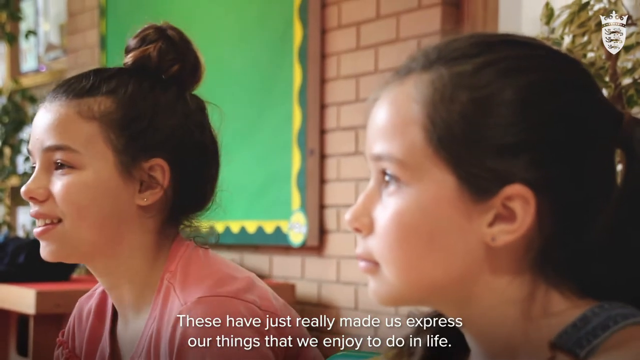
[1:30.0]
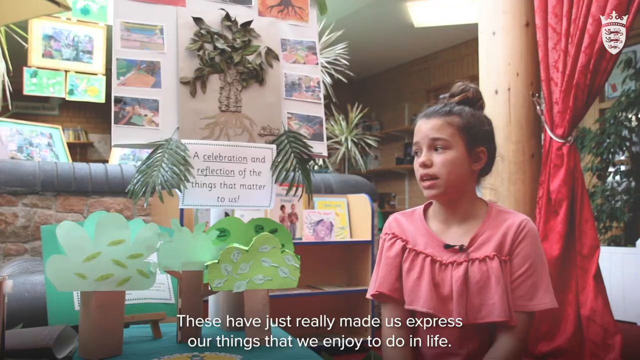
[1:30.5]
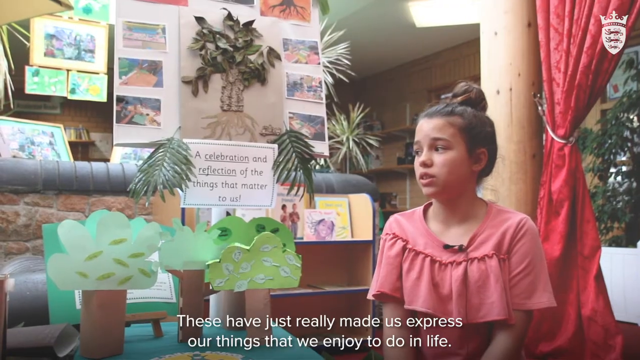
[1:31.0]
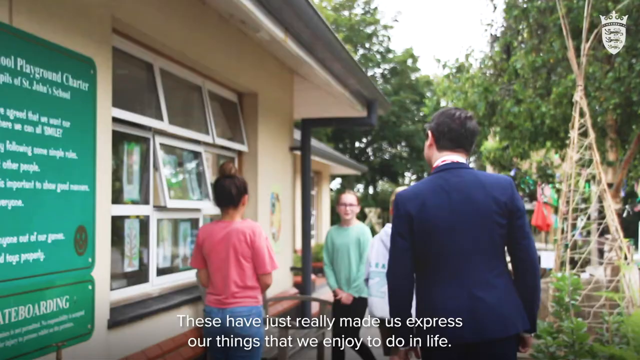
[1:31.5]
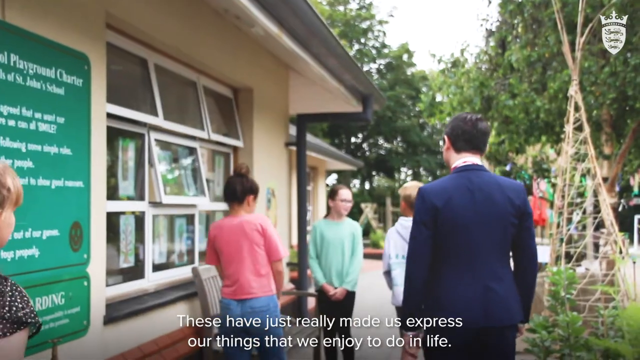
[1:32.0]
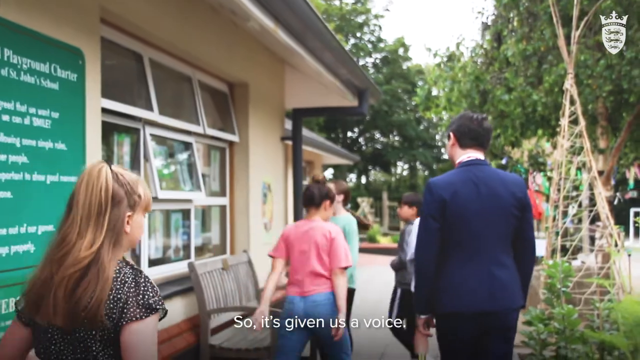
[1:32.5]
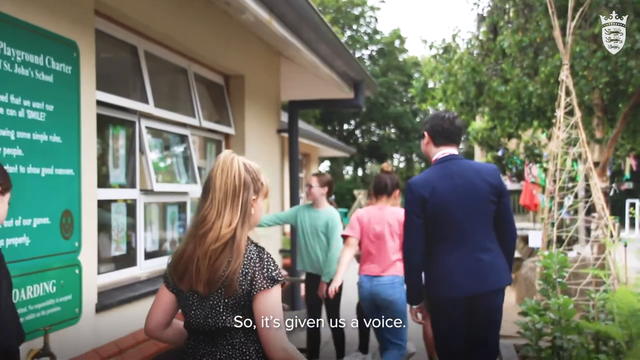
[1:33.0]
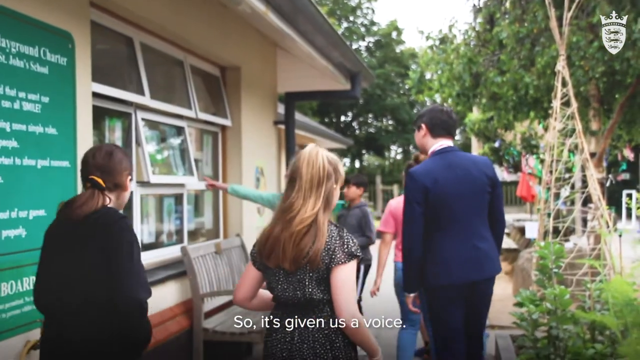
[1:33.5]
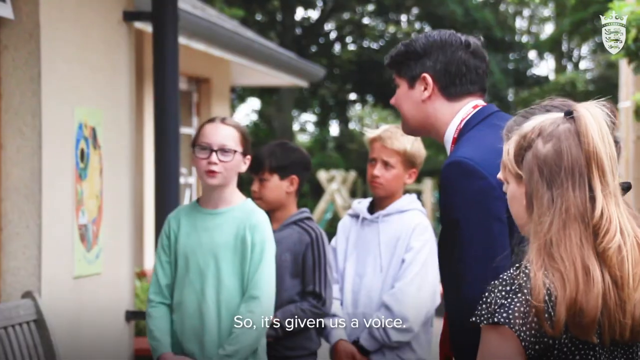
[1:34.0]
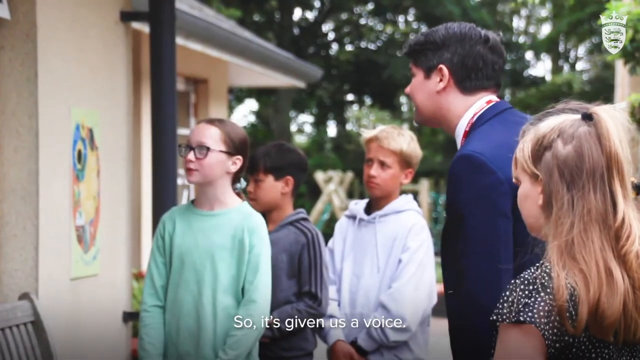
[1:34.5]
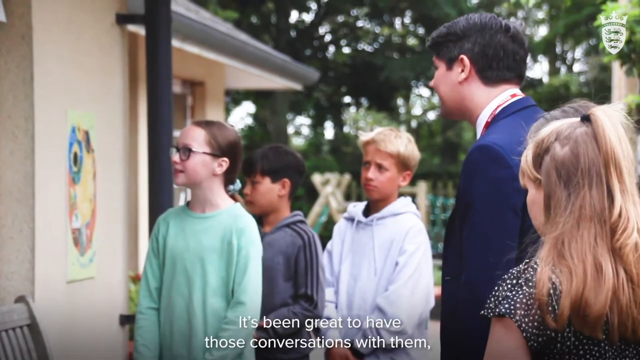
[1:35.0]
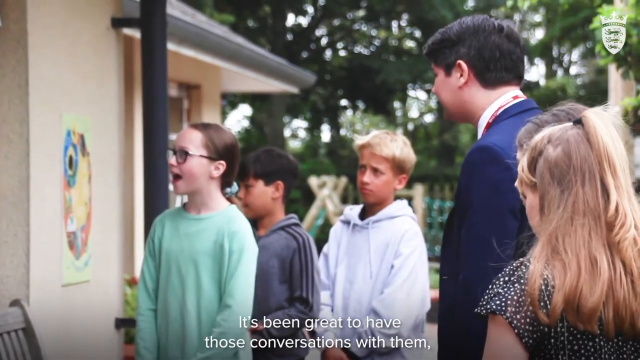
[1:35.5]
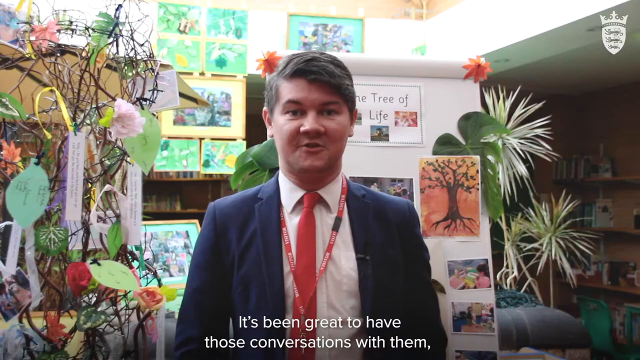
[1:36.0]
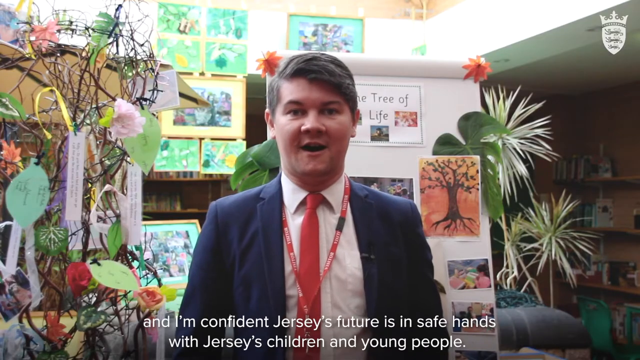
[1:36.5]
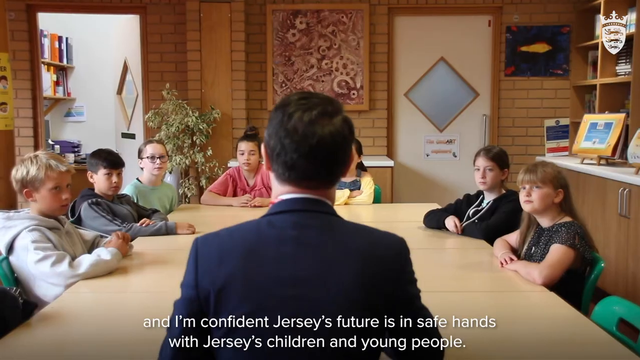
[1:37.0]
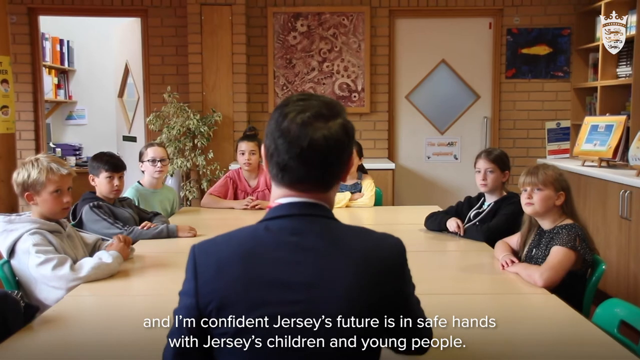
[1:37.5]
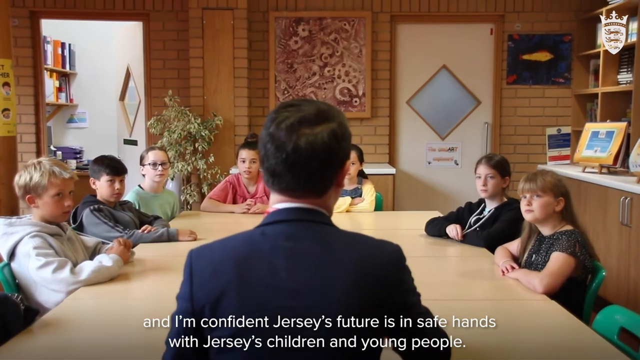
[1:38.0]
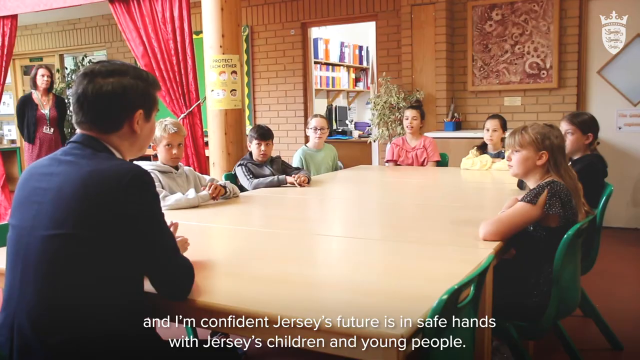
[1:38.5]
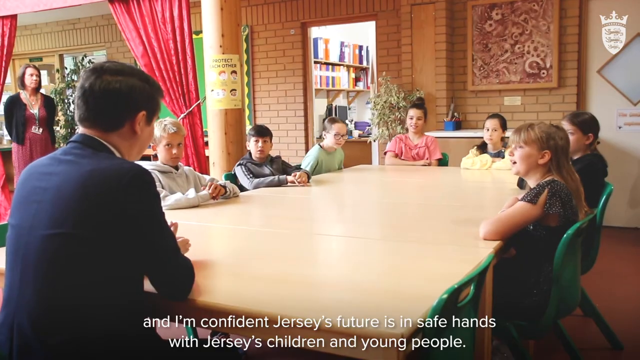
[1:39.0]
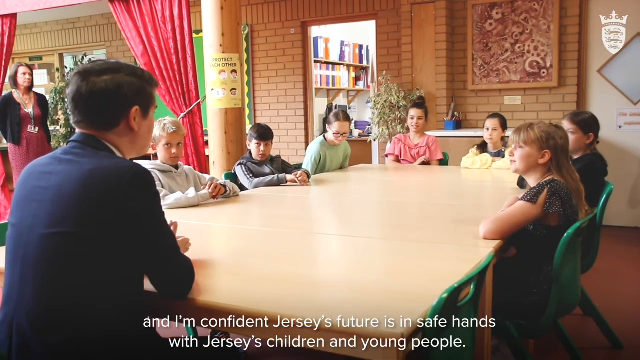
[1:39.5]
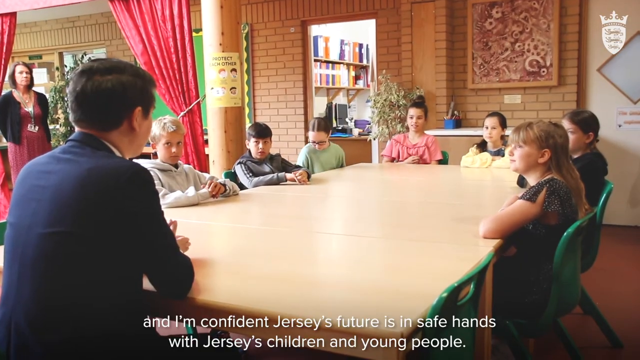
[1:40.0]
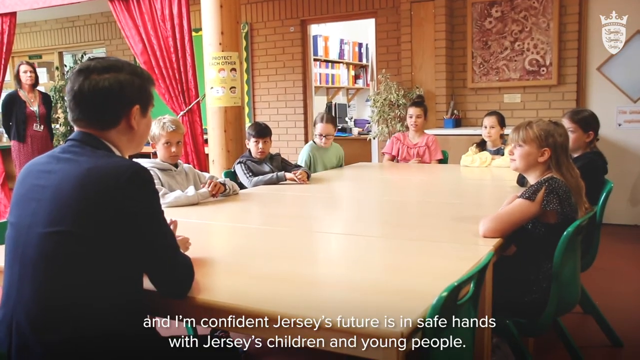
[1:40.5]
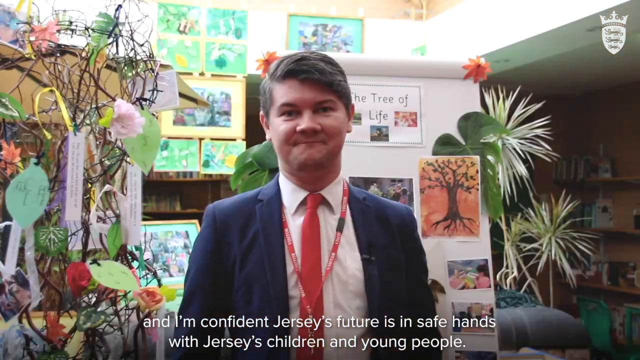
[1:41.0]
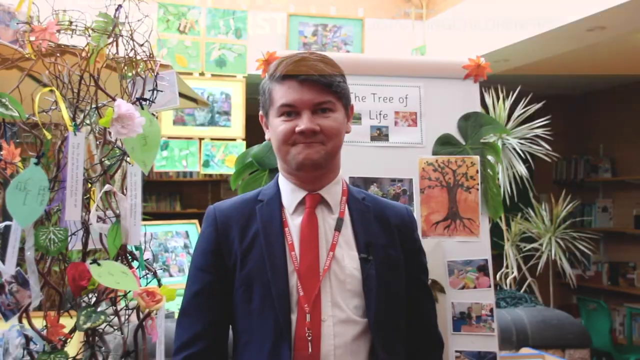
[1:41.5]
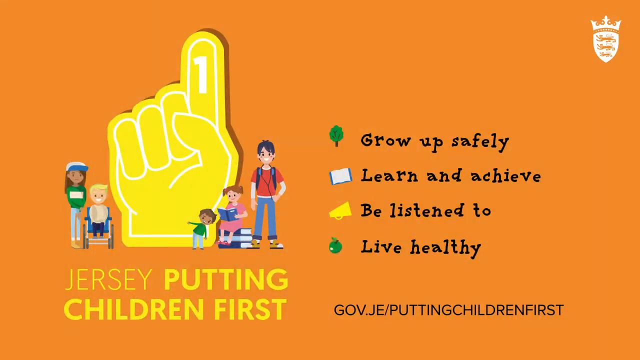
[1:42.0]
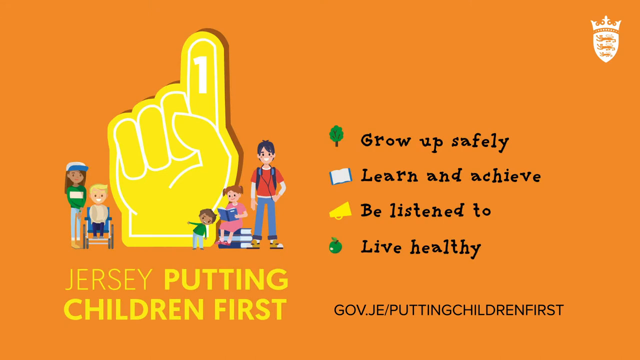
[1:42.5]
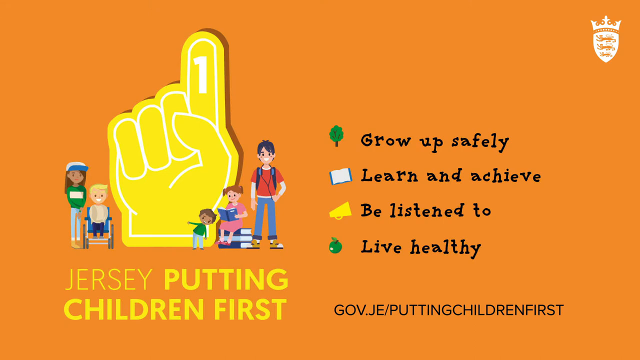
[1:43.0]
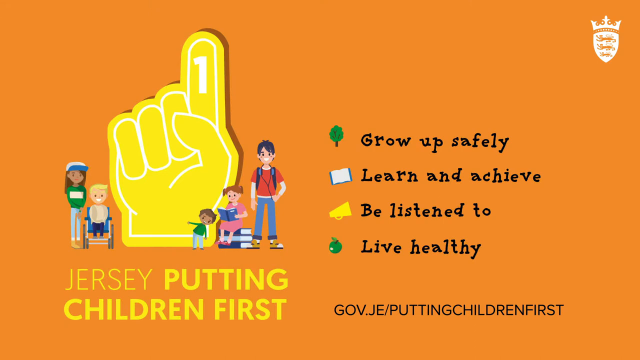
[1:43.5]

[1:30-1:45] The little girl talks about what the project has given them, restating that they have been given a voice. The professor, or teacher, then talks about giving the students a chance to share their voices. "Jersey putting children first" appears to be an event or community project to help children express themselves and put their art on display. The video ends with bullet points of the project's objectives: "live healthy", "be listened to", "learn and achieve" and "grow up safely".